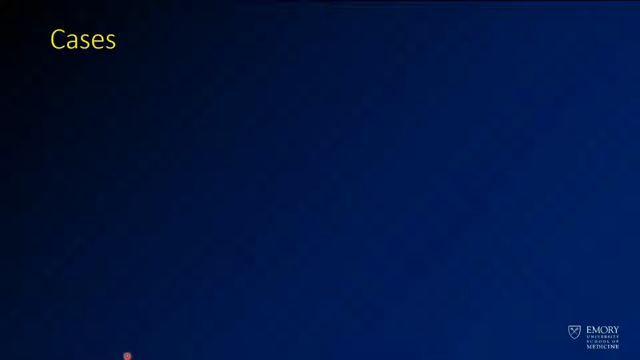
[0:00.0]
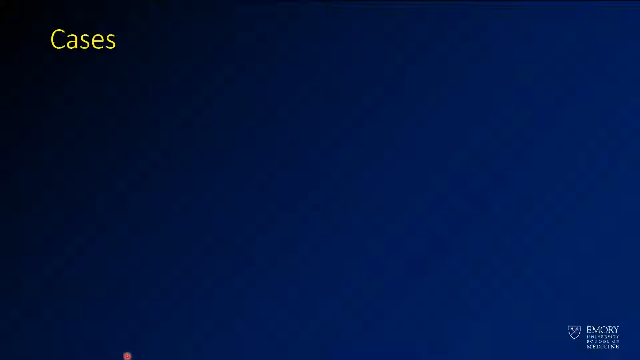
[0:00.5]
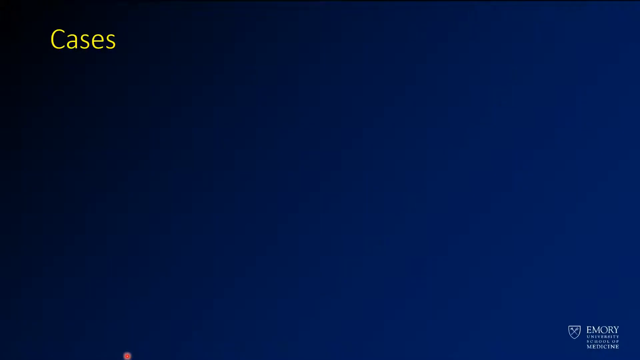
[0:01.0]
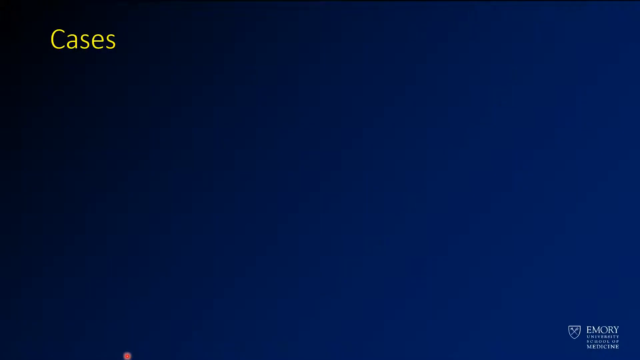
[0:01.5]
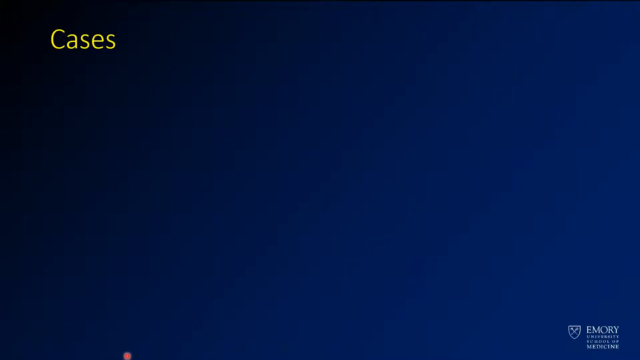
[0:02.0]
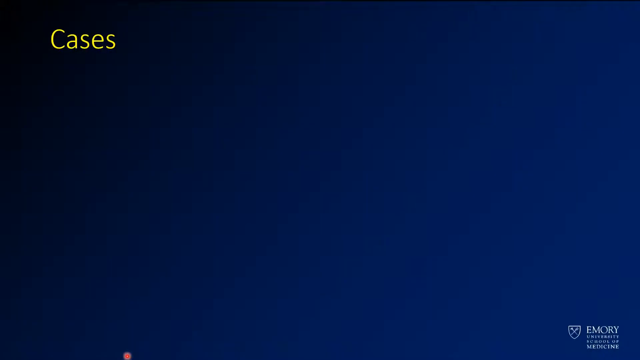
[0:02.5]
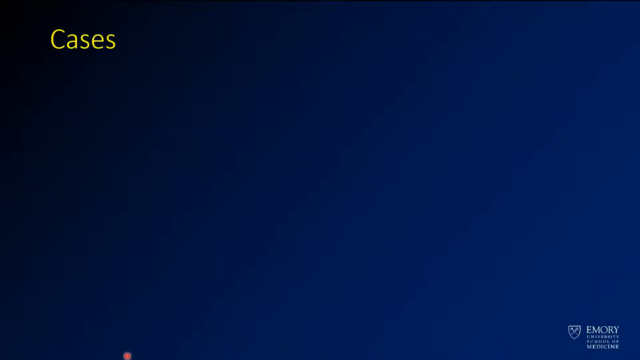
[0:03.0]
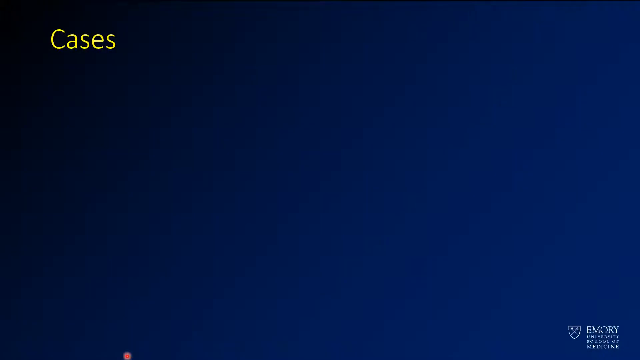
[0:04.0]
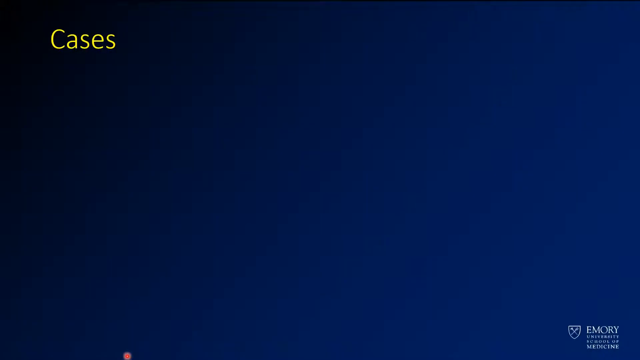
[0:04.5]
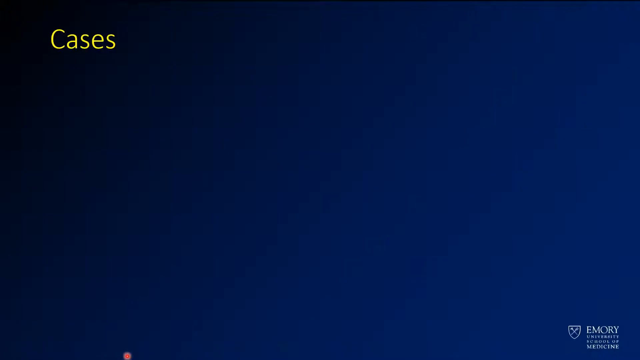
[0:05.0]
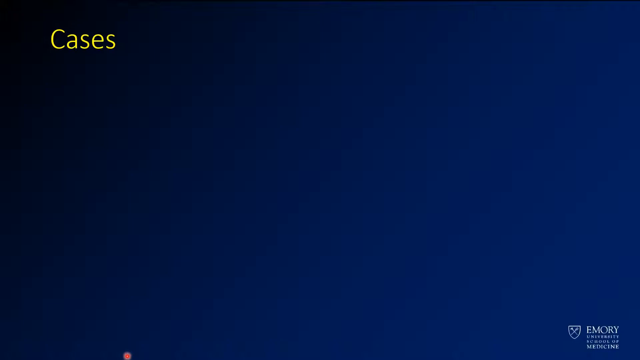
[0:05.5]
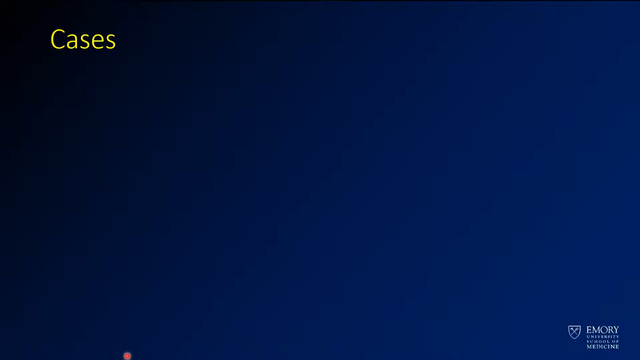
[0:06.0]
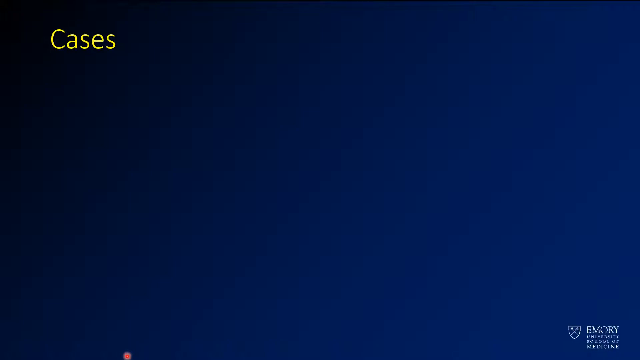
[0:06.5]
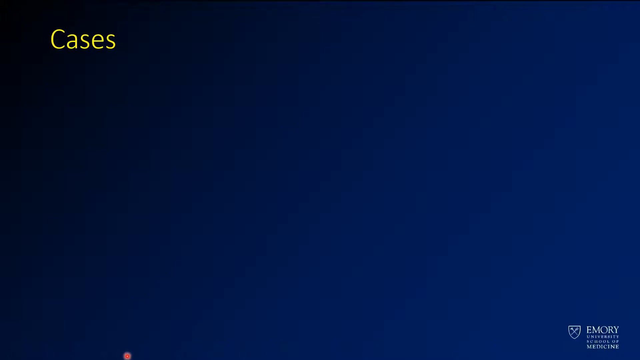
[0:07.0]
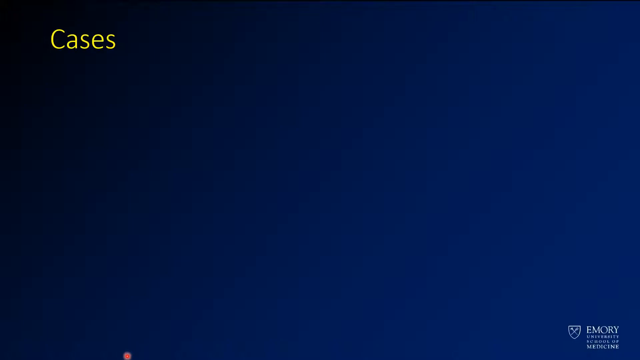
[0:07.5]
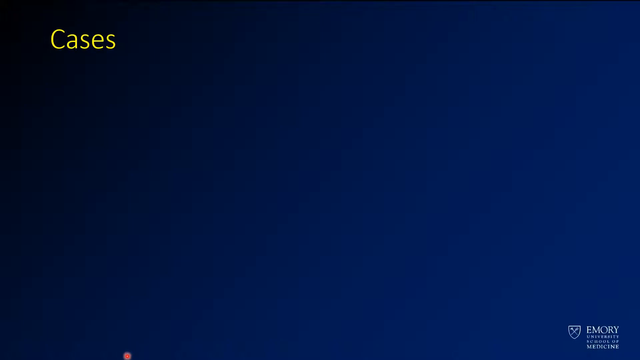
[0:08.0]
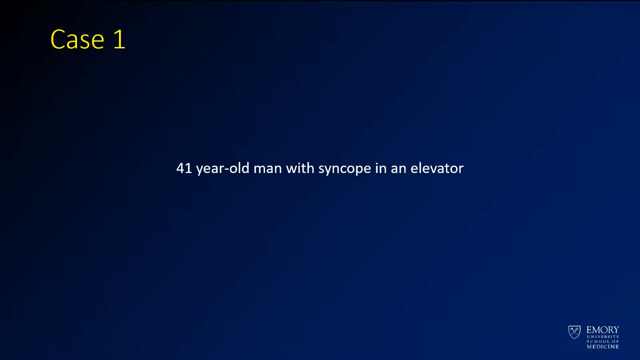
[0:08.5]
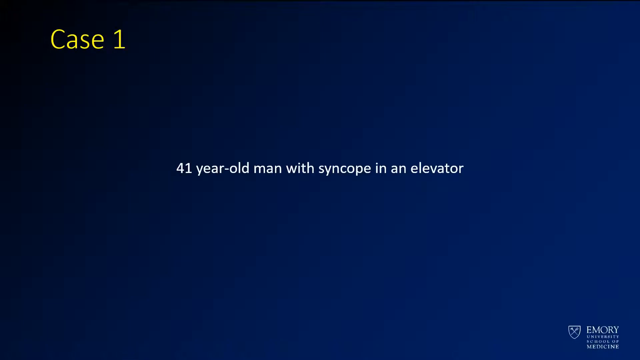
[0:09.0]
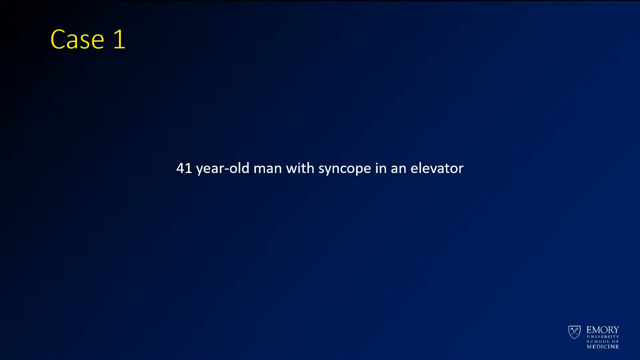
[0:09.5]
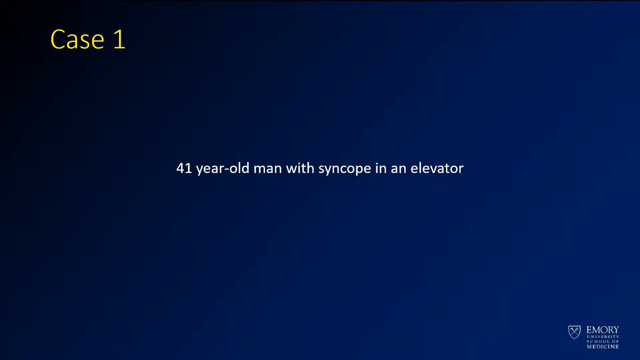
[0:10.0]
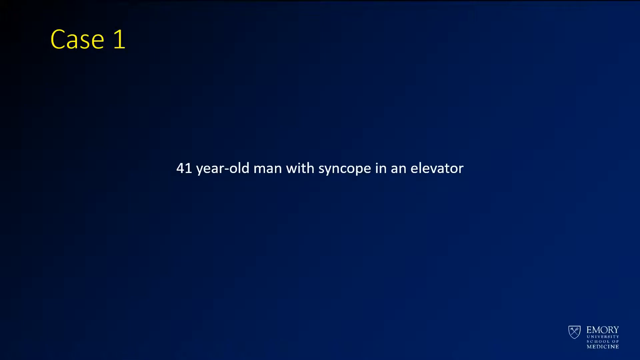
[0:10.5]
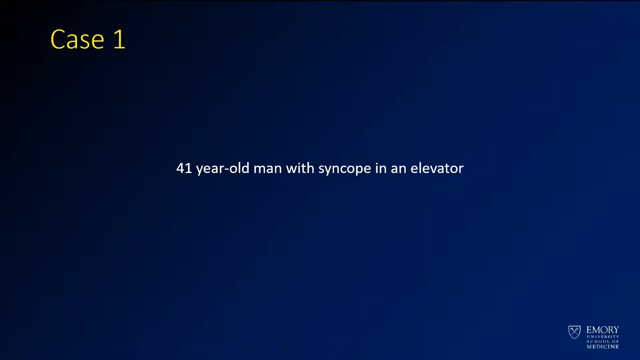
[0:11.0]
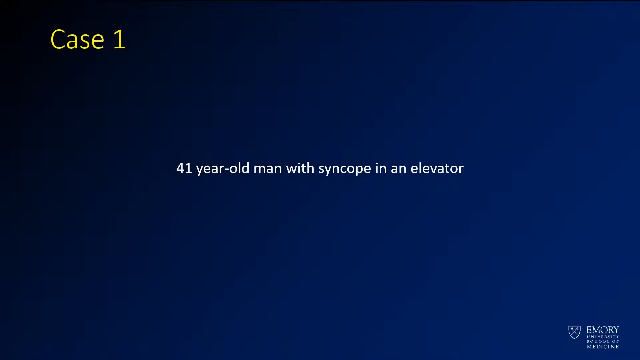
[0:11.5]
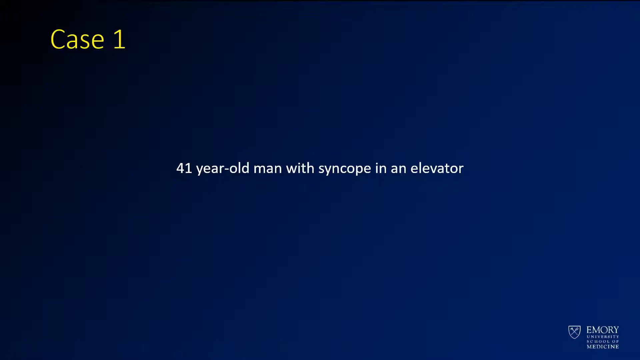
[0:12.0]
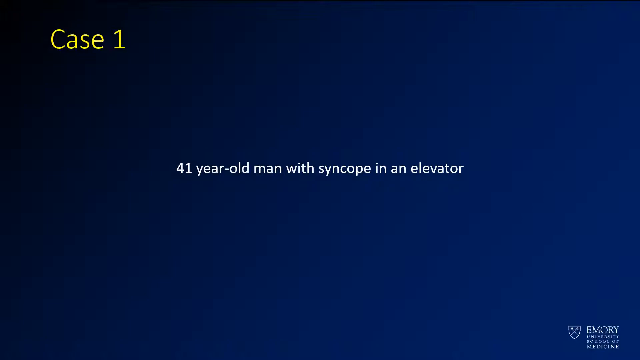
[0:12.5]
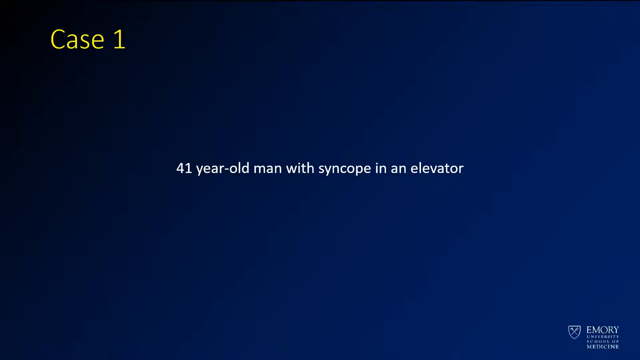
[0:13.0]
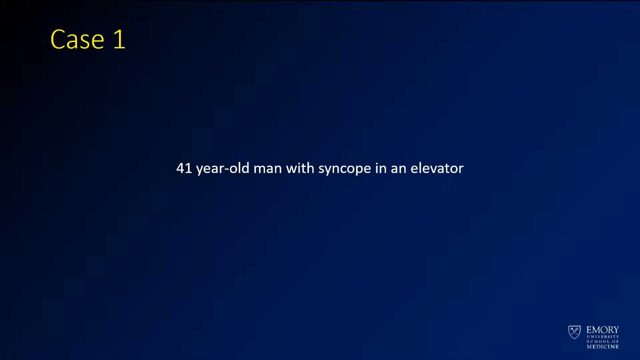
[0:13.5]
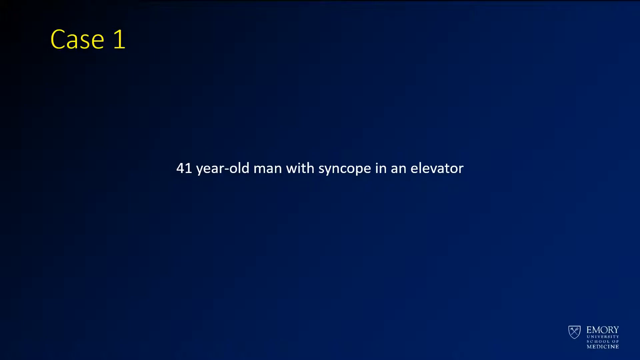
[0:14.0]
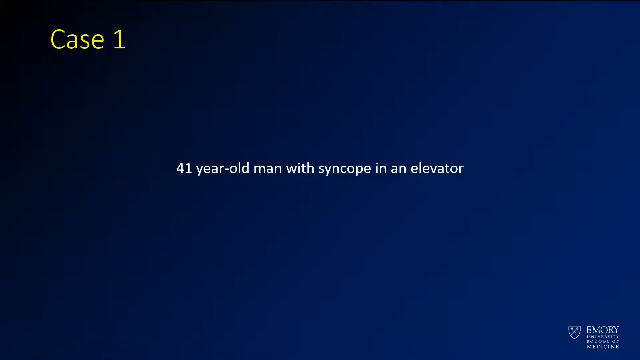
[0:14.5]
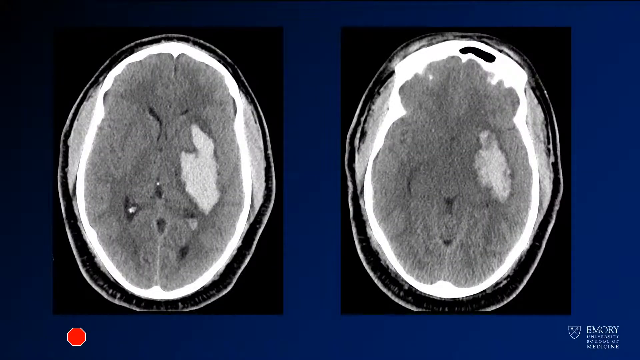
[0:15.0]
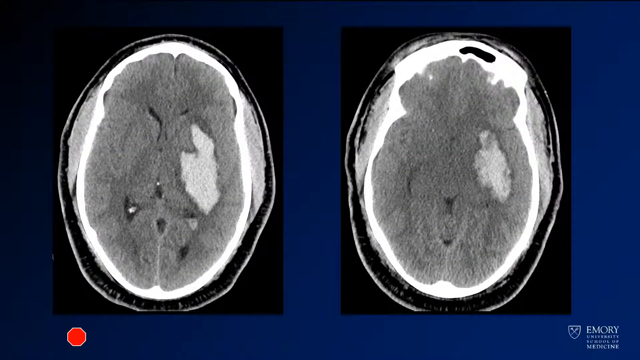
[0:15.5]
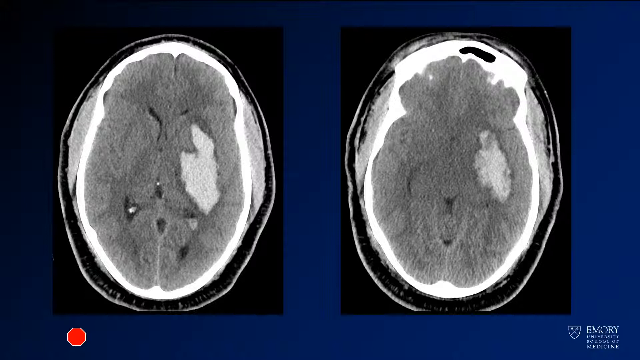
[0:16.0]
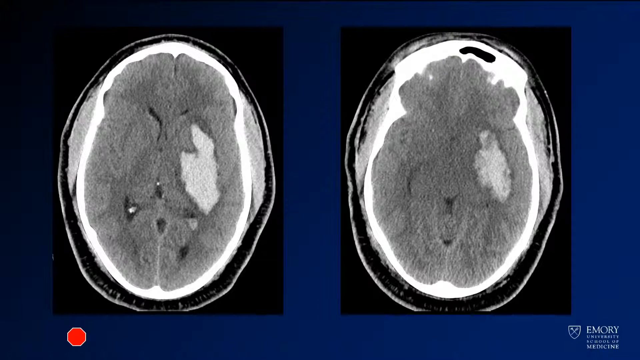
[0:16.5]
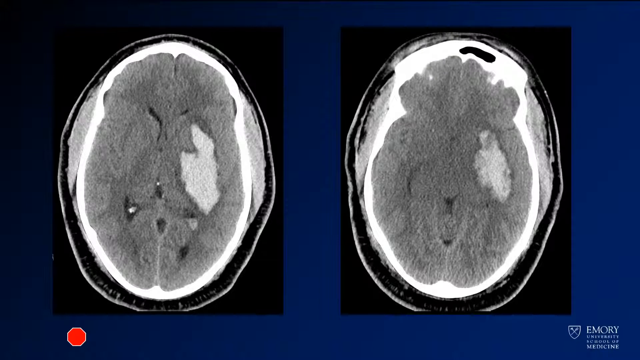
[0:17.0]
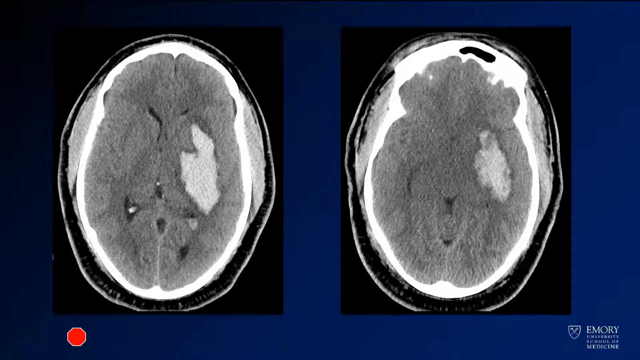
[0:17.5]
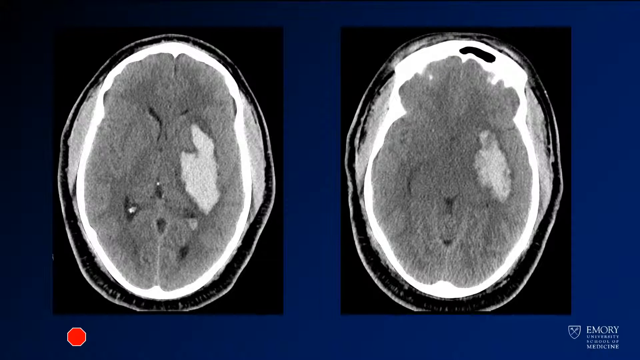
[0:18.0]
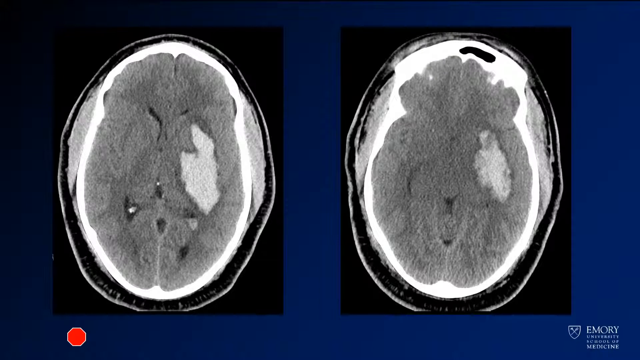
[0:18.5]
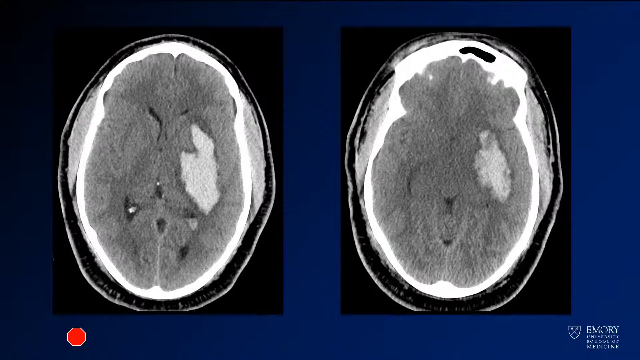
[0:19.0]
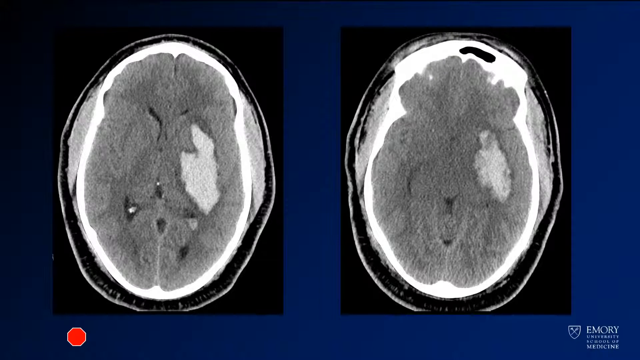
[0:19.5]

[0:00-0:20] The video opens on a black screen, after which yellow letters reading "Cases" appear in the top left-hand corner. In the bottom right-hand corner is small blue lettering with what seems to be an Emory University coat of arms. The first case is a 41-year-old man with a syncope in an elevator. Two CAT-scan-like slices cut in a horizontal plane are shown, apparently scans of this man. They show an area of his brain that looks like a different color from the rest of the scan; the area is large on the left-hand side and small on the right-hand side.